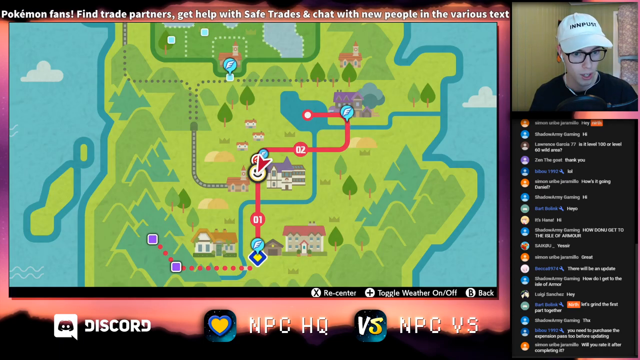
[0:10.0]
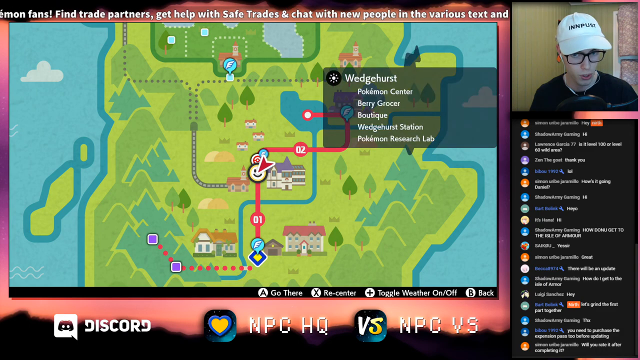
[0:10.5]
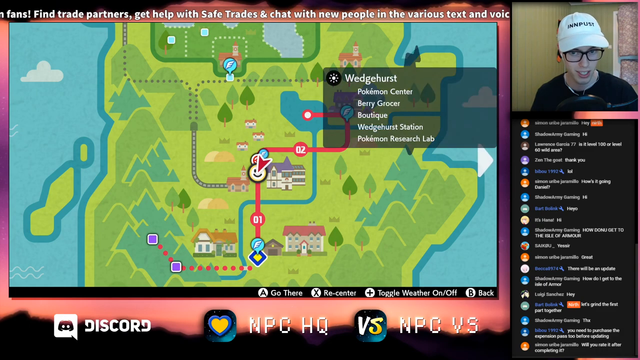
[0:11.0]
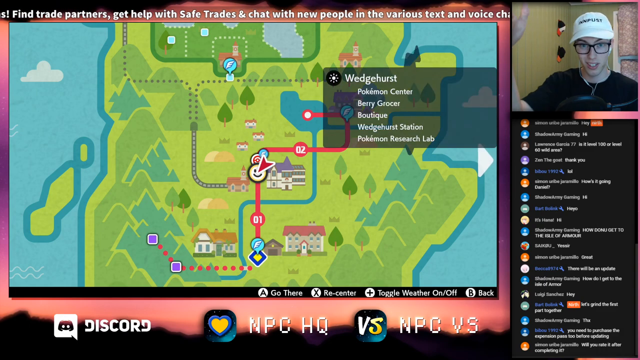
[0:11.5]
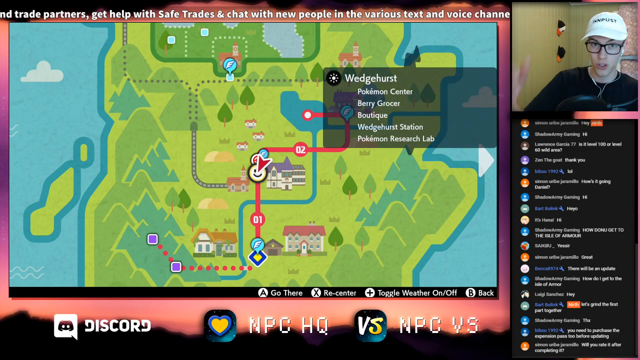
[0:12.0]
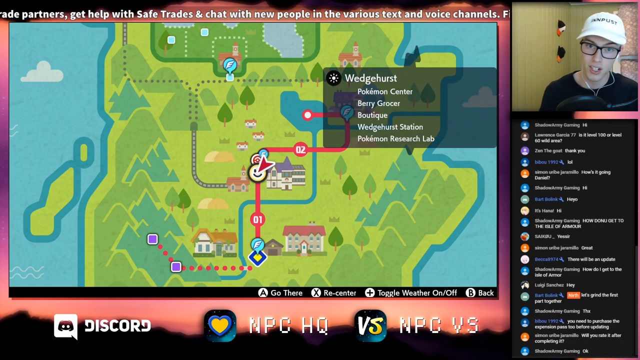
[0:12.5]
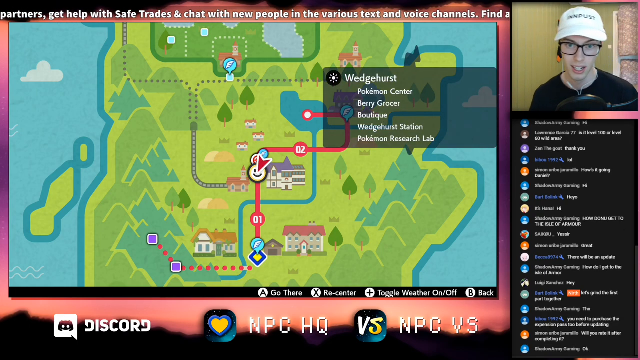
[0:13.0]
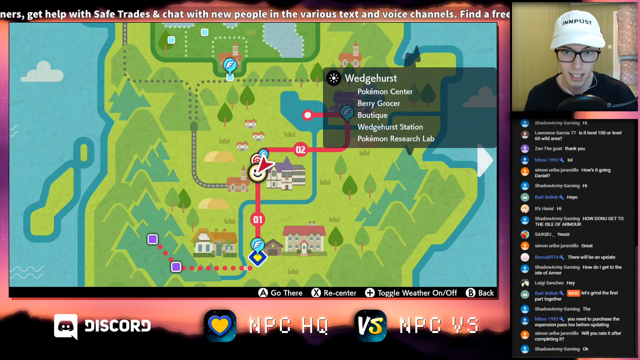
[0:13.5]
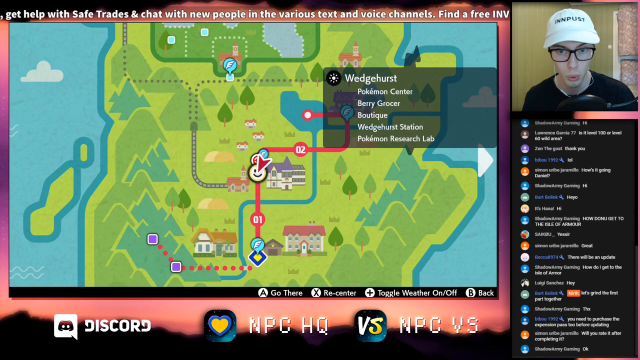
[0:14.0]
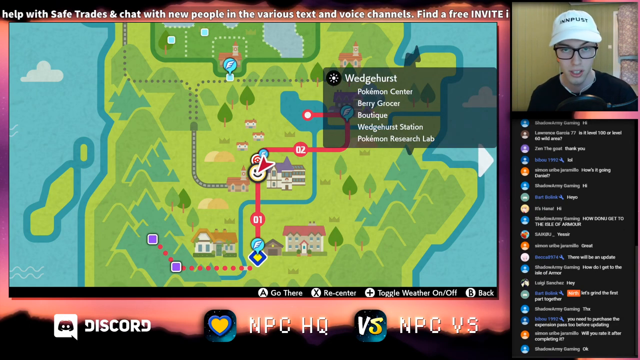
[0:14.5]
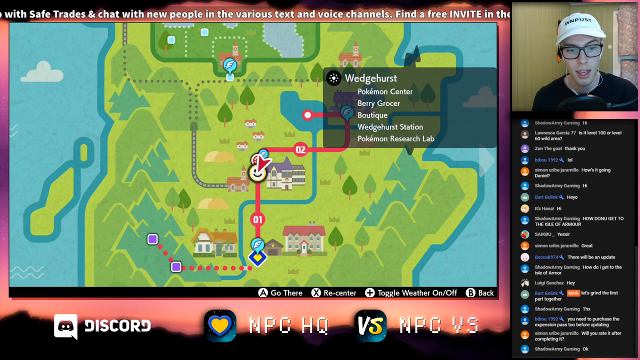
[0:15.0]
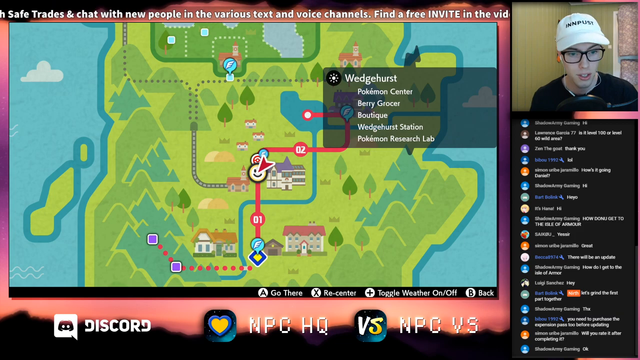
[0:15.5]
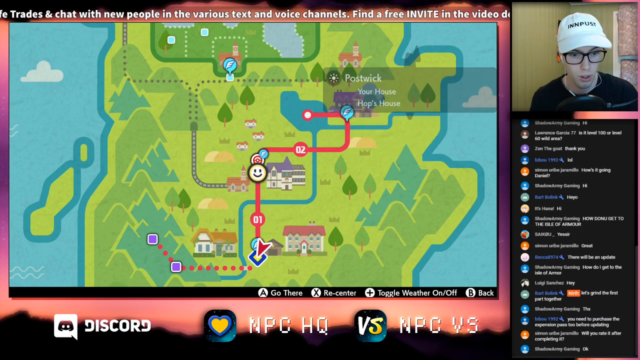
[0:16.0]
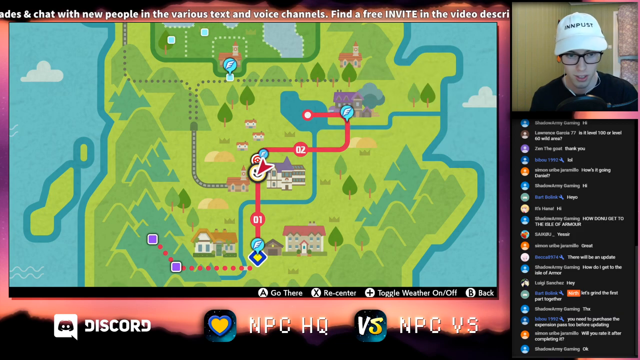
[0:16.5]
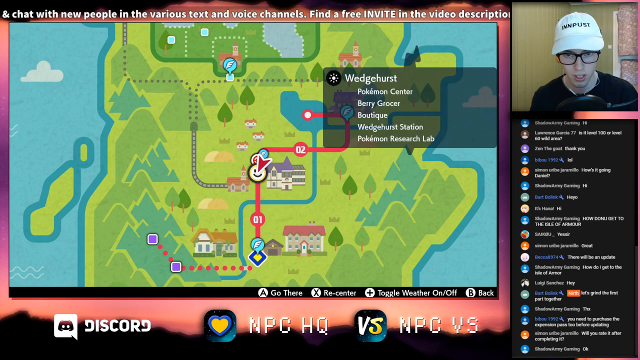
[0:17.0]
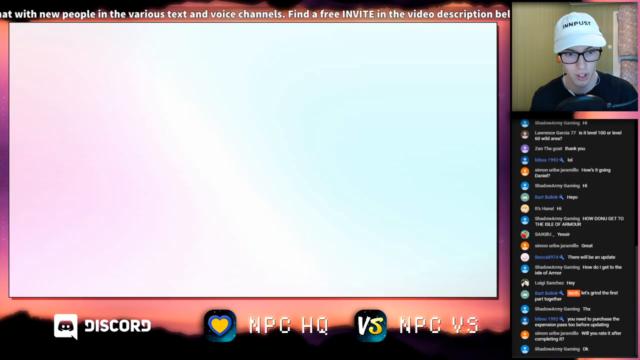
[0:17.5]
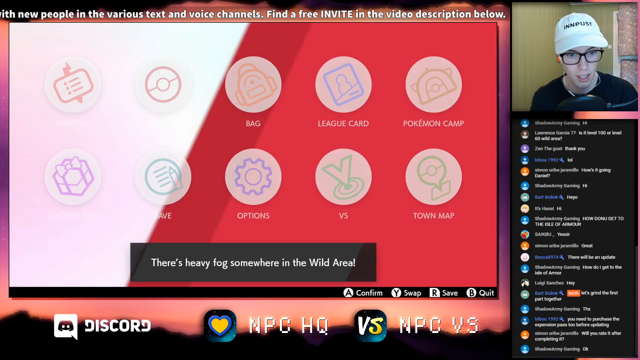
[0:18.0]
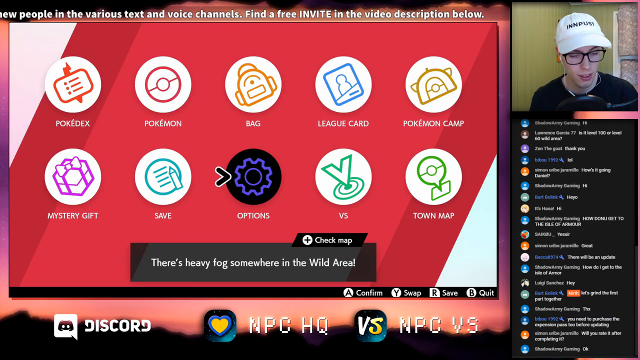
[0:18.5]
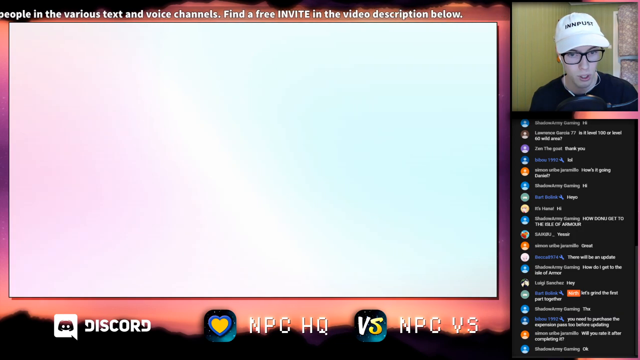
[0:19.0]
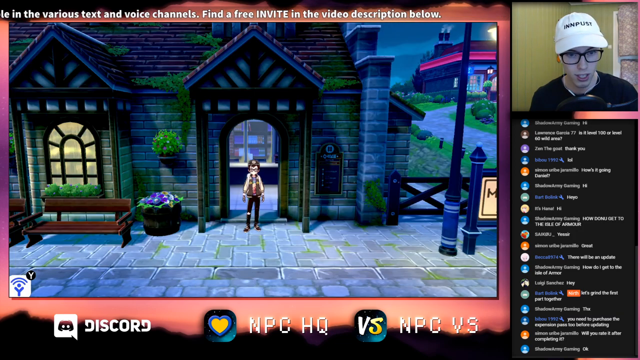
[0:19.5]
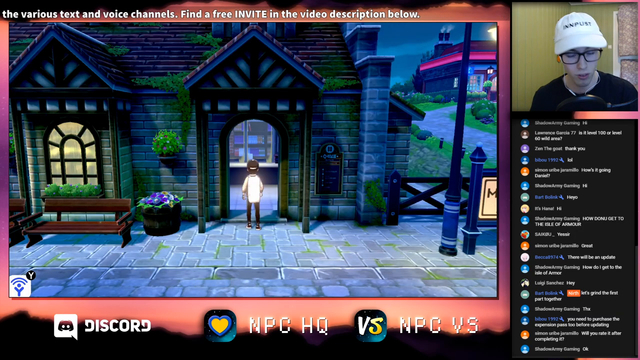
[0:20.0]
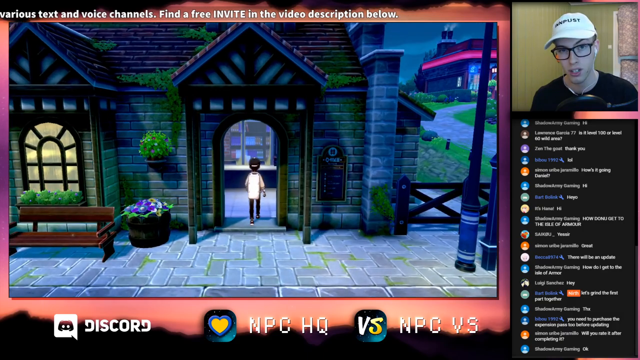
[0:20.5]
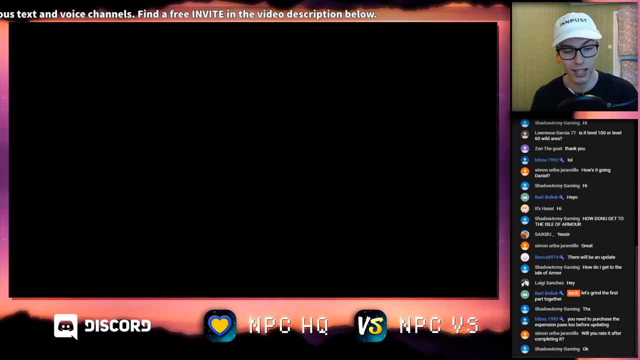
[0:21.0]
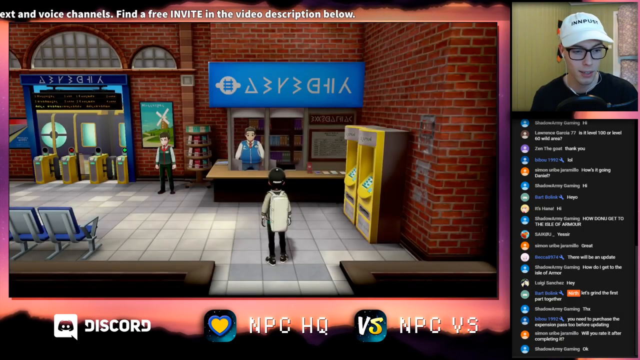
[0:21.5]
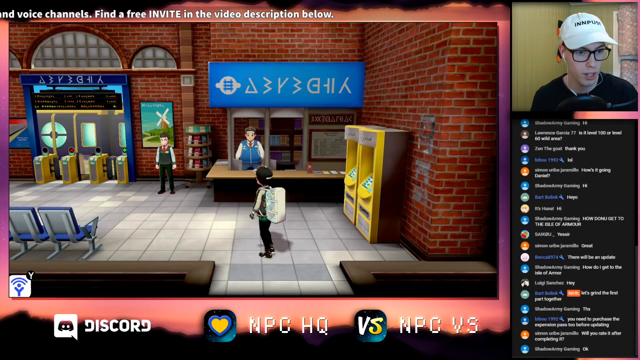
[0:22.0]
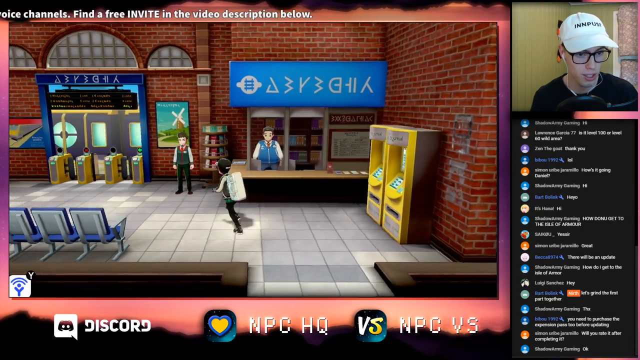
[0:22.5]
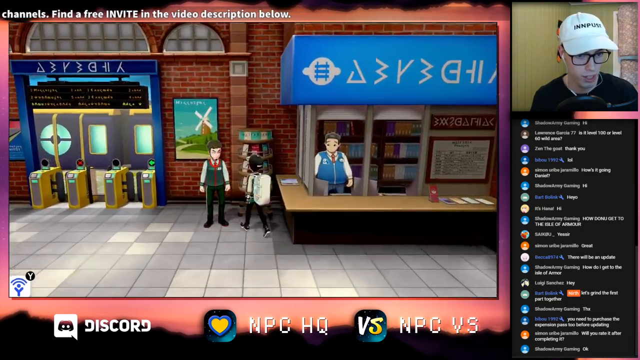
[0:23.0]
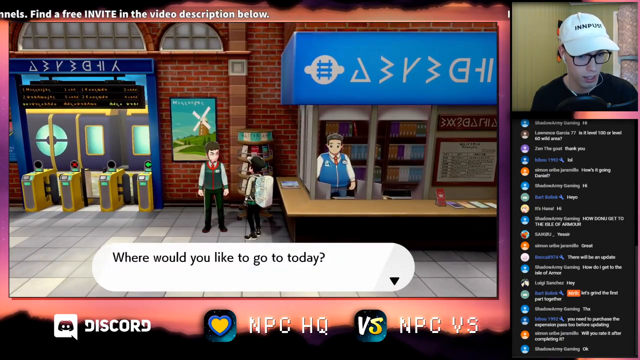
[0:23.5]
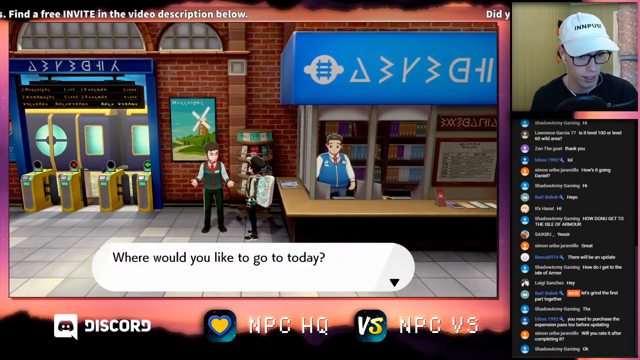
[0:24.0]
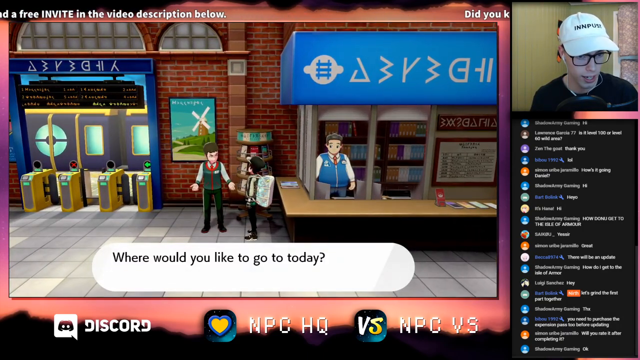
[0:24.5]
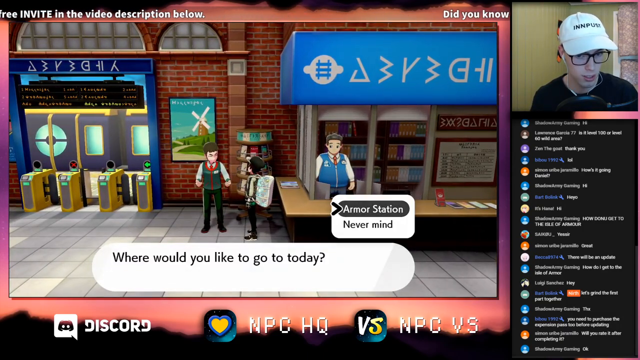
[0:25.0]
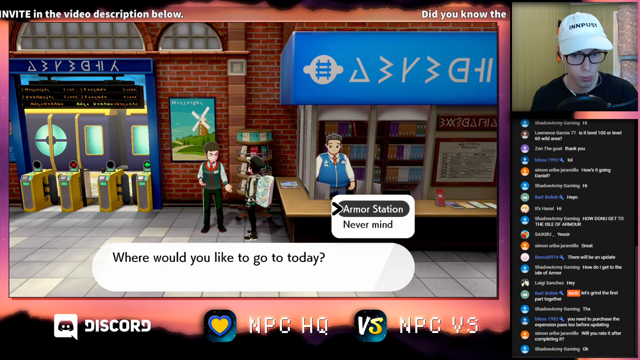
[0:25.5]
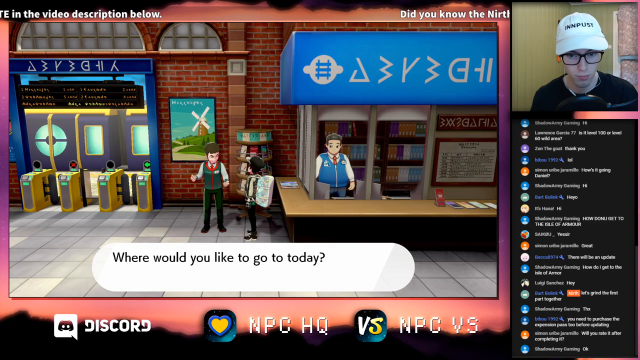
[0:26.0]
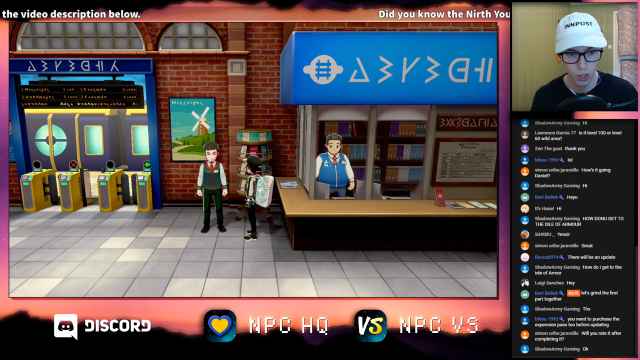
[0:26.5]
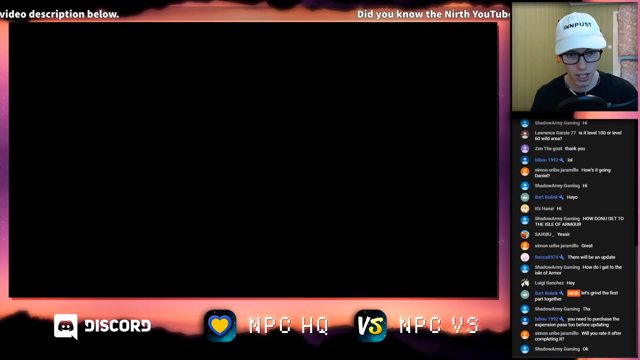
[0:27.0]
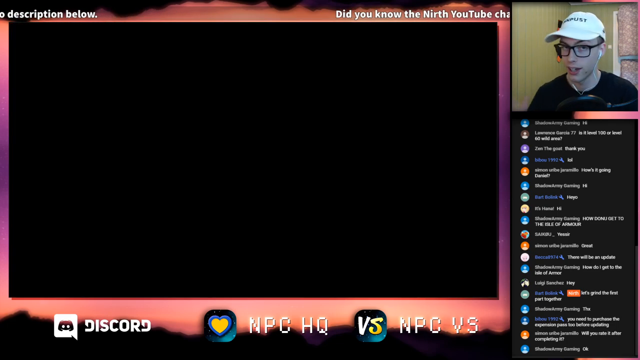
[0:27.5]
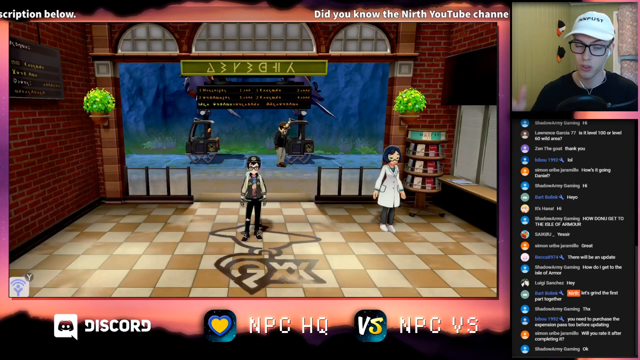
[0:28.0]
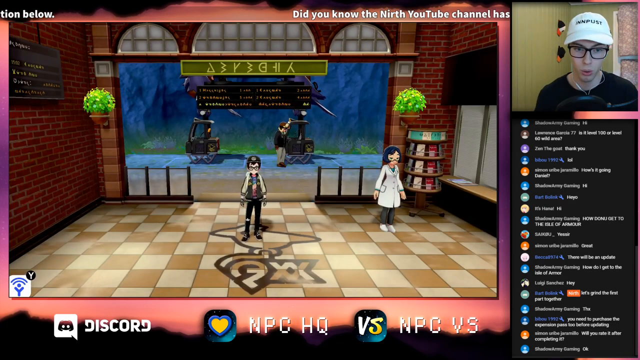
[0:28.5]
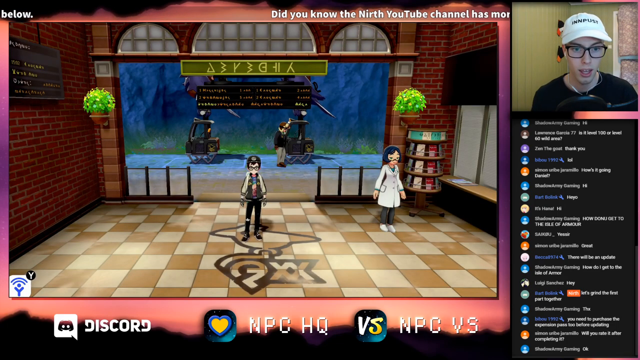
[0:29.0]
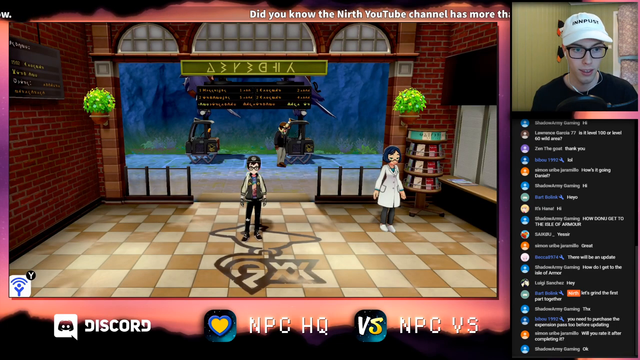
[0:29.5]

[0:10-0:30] A cartoony map appears, with water on the left and right-hand sides and a green center showing various mountains, woods, towns and roads. A menu reads "Wedgehurst", and beneath it are "Pokemon Center", "Berry Grocer", "Boutique", "Wedgehurst Station" and "Pokemon Research Lab", apparently the town being viewed. A smiley face is partway along a red line on the map, with a cursor on top of it. It appears to be clicked, and the video cuts back to the person in the doorway of the building, who turns around and goes inside. The inside of the building is shown, apparently a station: there are two yellow ticket machines, a desk operated by a member of staff, what looks like ticket barriers, and benches. The main character runs up to the member of staff, who asks where they would like to go today. The choices are "Armour Station" or "Nevermind", and Armour Station seems to be selected.